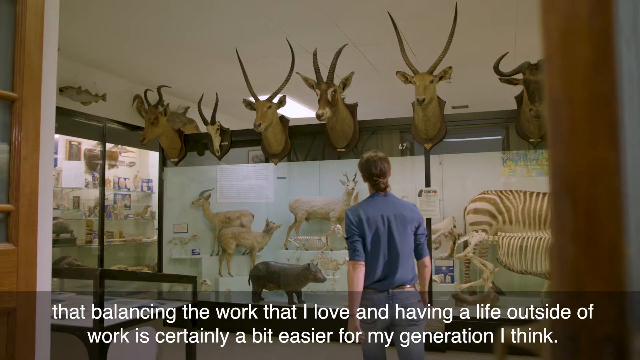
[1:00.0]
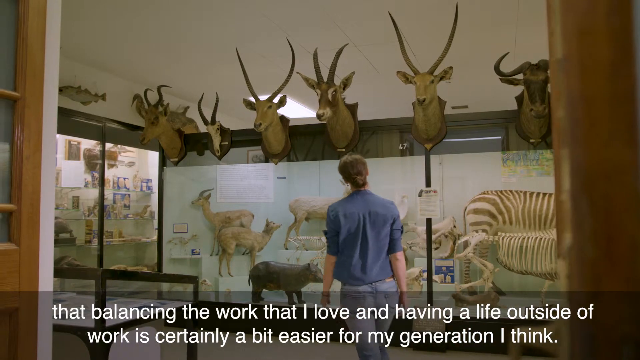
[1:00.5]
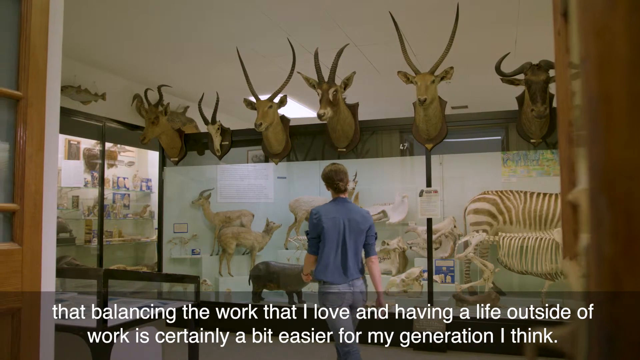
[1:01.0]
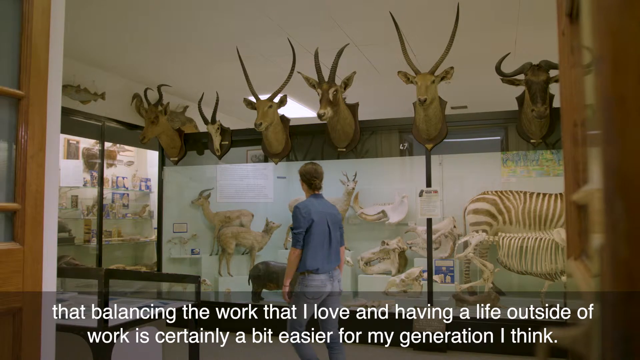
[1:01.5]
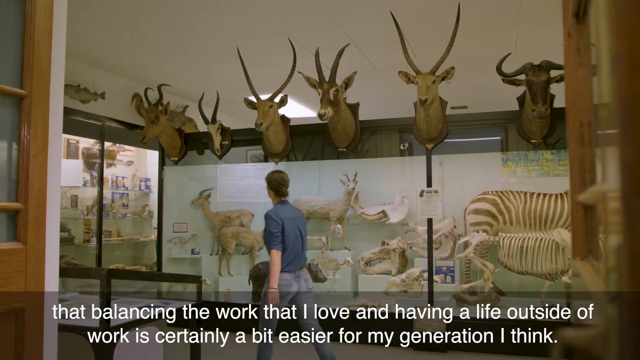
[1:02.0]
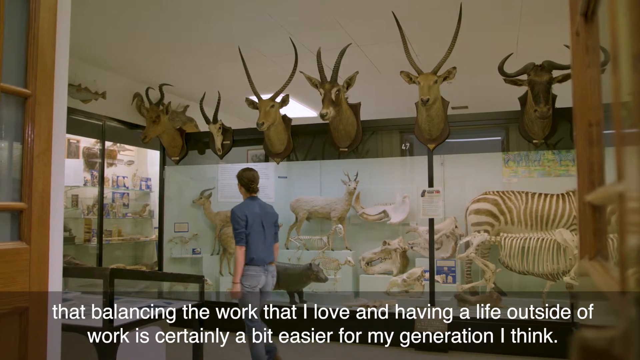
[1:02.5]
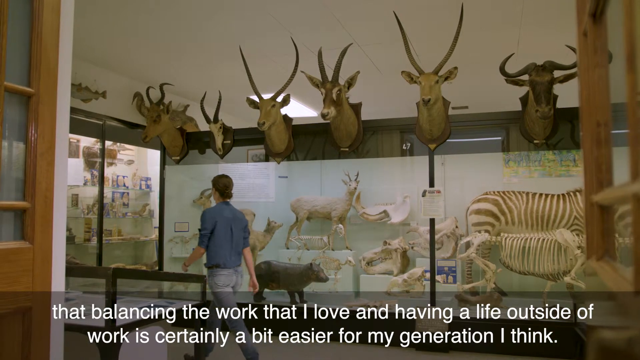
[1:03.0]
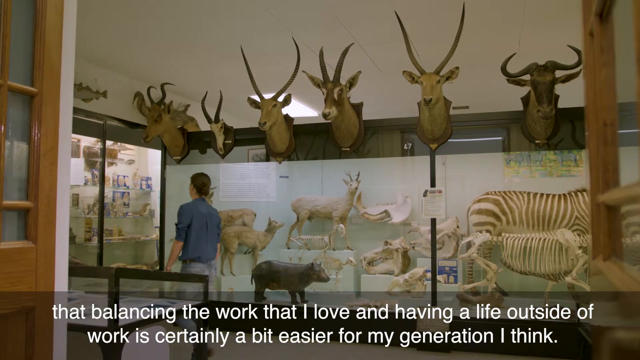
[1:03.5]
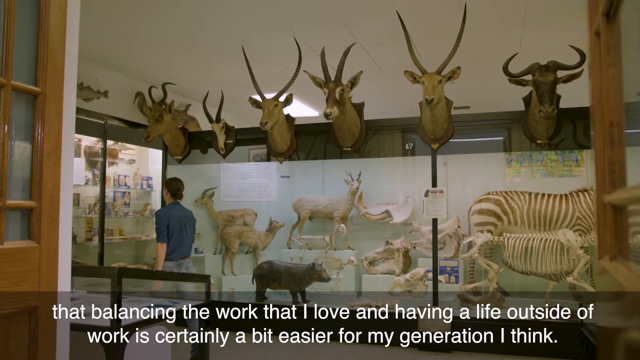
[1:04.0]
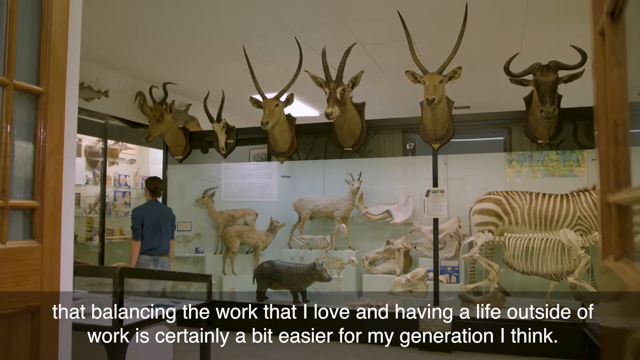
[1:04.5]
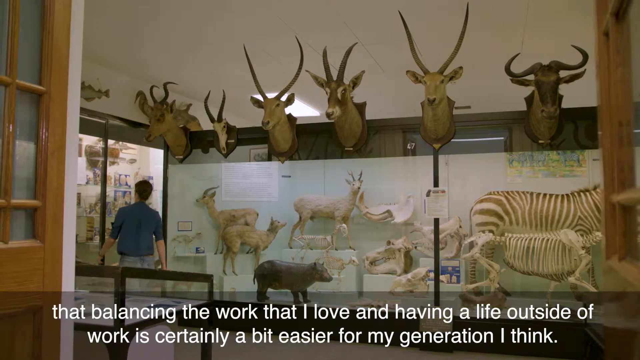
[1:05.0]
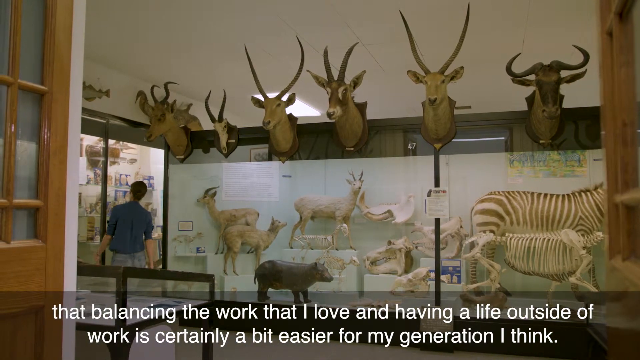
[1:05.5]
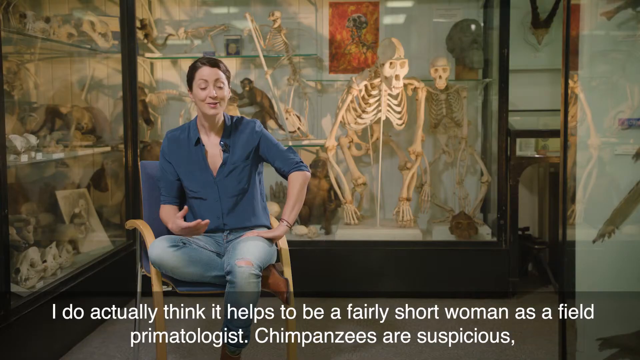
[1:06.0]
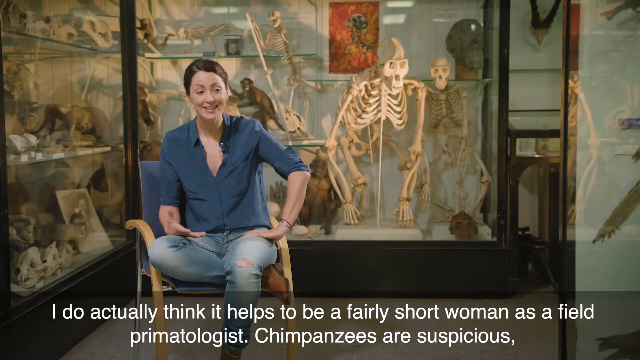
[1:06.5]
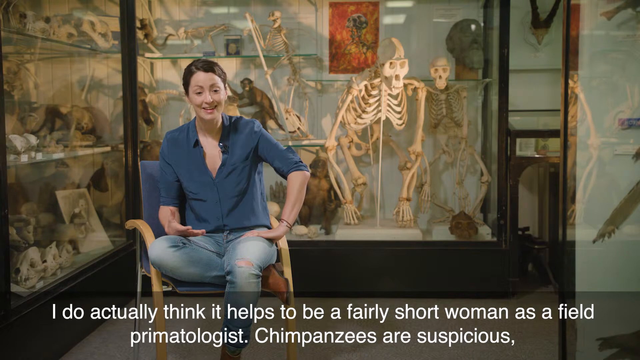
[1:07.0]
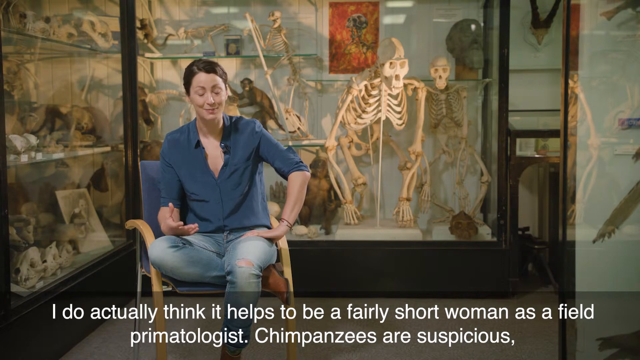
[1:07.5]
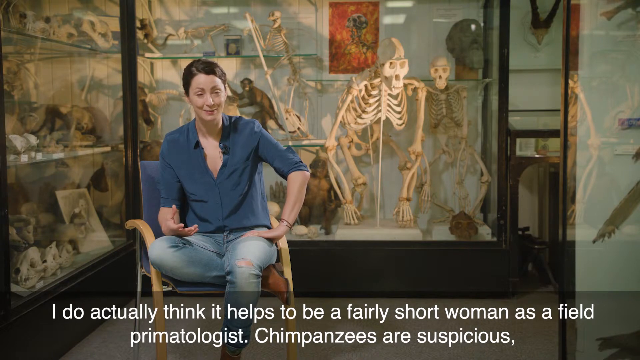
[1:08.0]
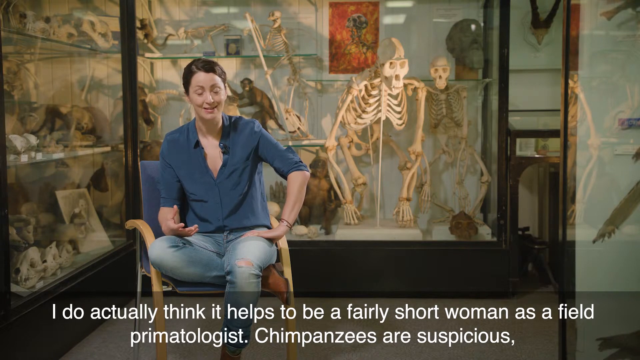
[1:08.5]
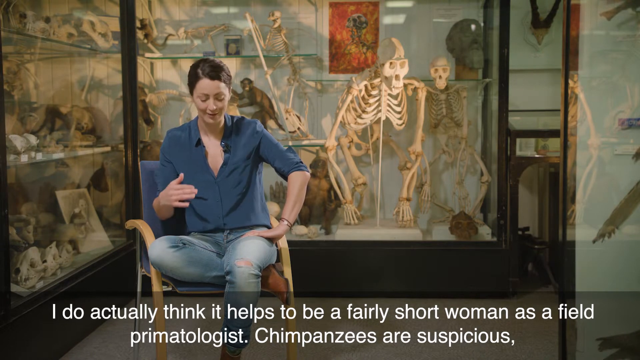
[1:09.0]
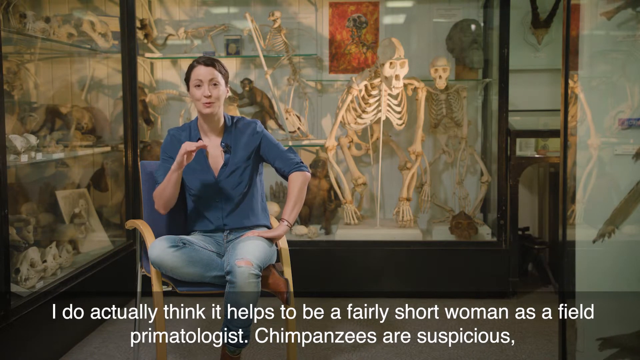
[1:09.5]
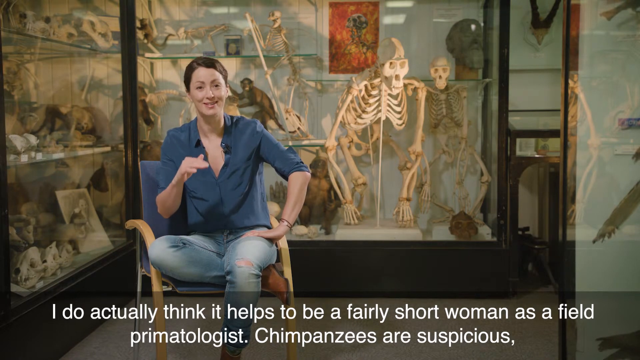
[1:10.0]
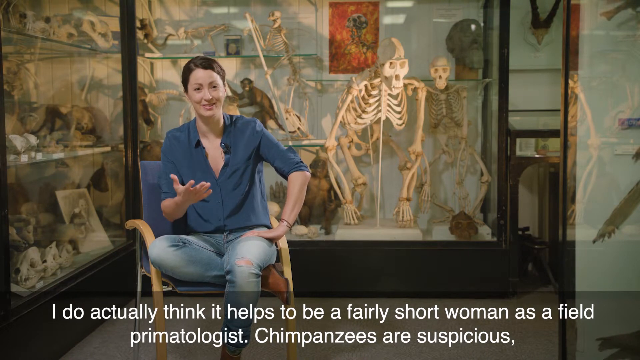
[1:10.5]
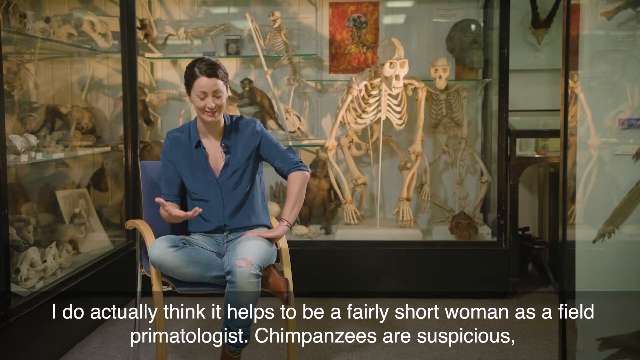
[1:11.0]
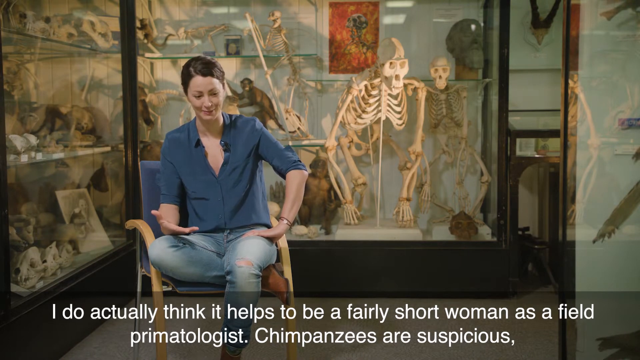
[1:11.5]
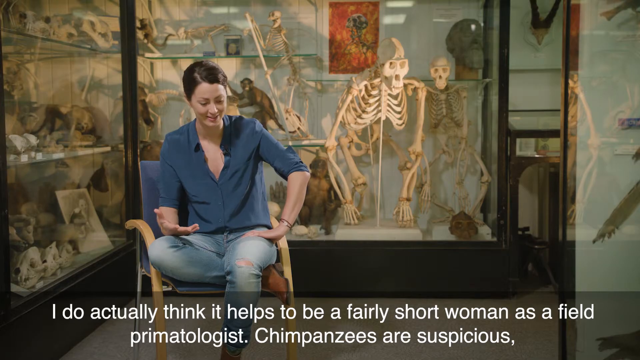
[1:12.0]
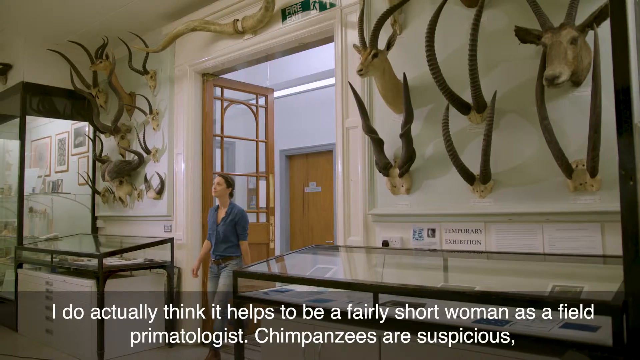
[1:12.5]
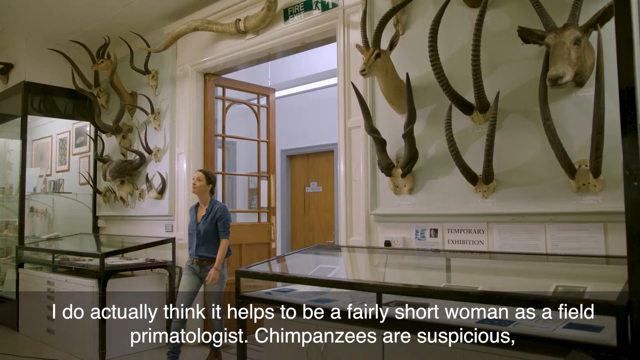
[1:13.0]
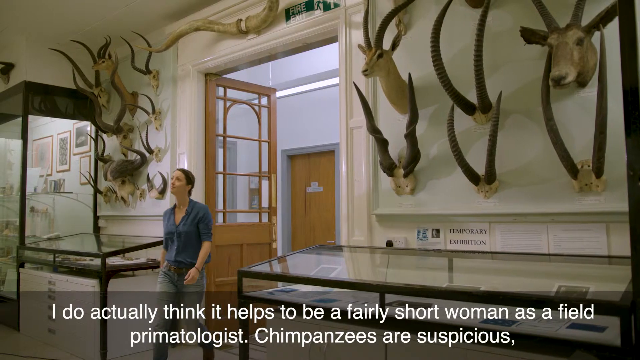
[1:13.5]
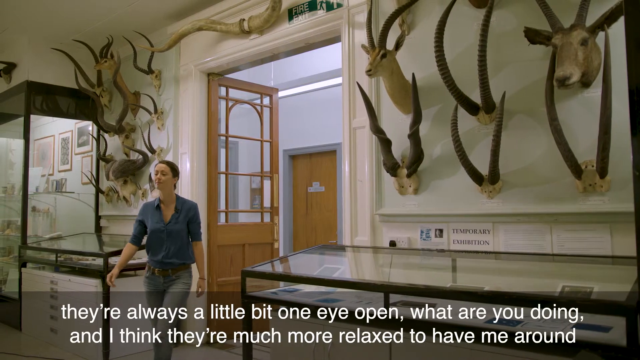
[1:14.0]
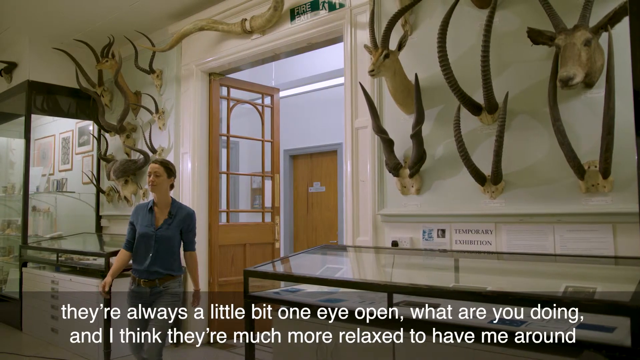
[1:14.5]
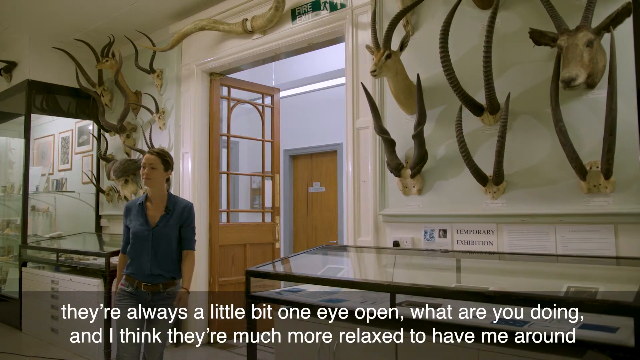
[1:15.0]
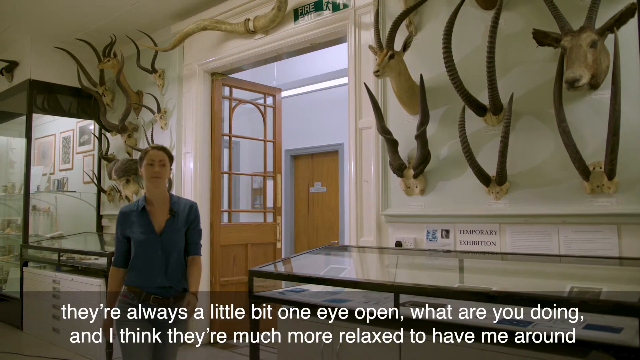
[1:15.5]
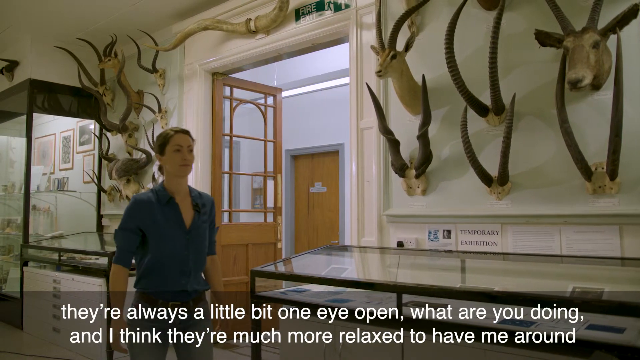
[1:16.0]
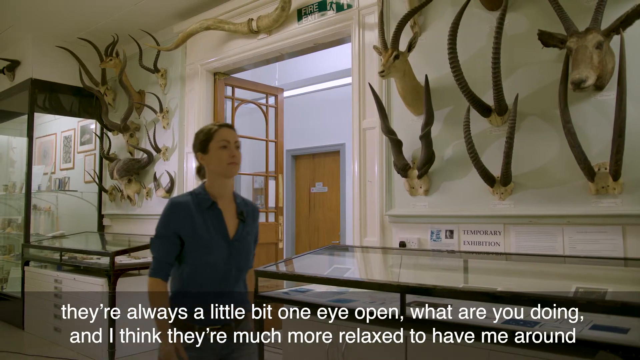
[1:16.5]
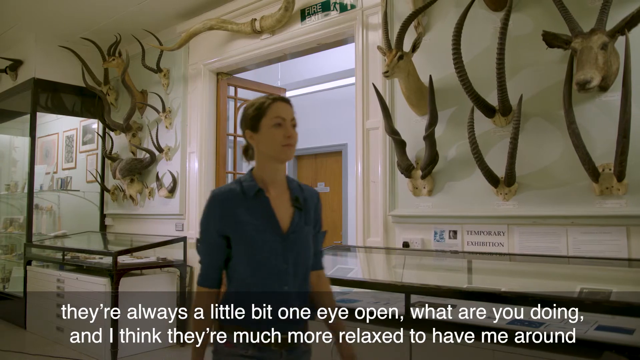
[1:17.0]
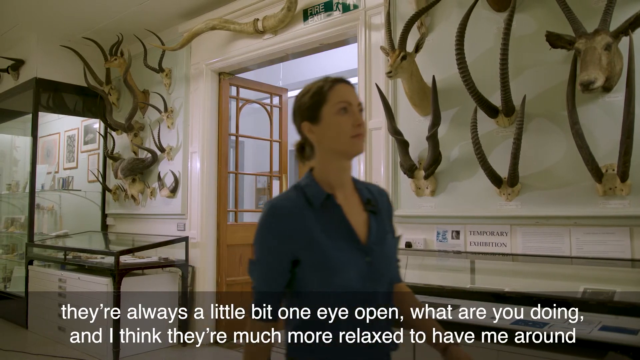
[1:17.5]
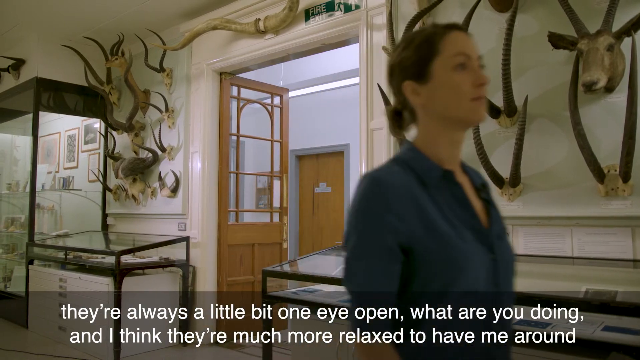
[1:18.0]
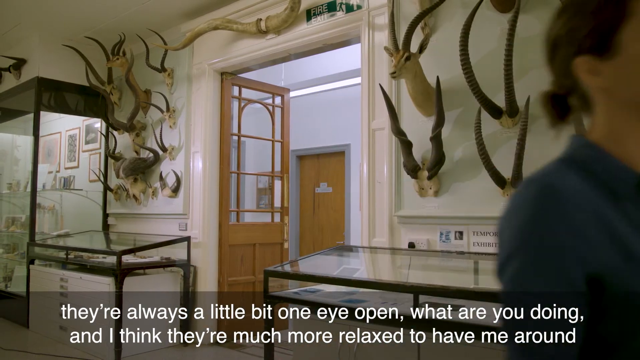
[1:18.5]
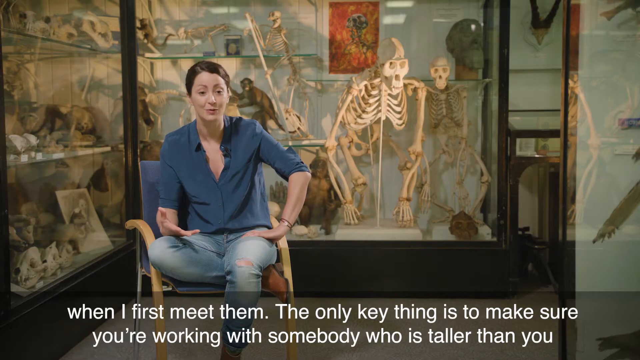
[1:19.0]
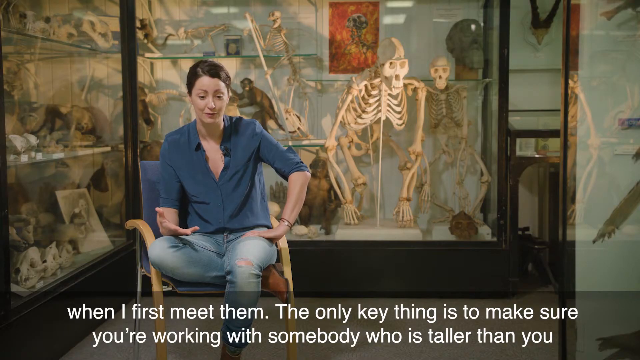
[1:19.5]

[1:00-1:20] A woman with brown hair tied in a bun, wearing a blue shirt with the sleeves rolled up to her elbows and blue jeans, faces away from the viewer and walks to the left side of a room filled with displays of antelope, deer and other horned stag-type animals. In a partially transparent dark gray text box at the bottom, white text reads "that balancing the work that I love and having a life outside of work is certainly a bit easier for my generation, I think." She walks left with her gaze on the display in front of her, then walks around a corner. The video shifts back to the woman sitting in a blue chair, with the bones and stuffed bodies of monkeys and apes in a display case behind her. The white text reads "I do actually think it helps to be a fairly short woman as a field primatologist. Chimpanzees are suspicious,". She smiles as she speaks, her left hand pressed down on her left thigh and her right hand resting on her right thigh. She leans forward a bit, raises her right hand for a second with fingers outstretched but a little curled, then brings it back down. Her eyes flutter as she speaks and her head raises. She brings up her right arm with her fingers flat and thumb pointed up and, as she begins speaking in a more excited manner, twists her hand so her palm faces upward with fingers outstretched in front of her. She looks down, then her eyes widen and her head tilts back as she continues. The video shifts to the woman walking to the left in a new room; she walks left, then toward the viewer, looking to the left. The text changes to "they are always a little bit one eye open, what are you doing, and I think they are much more relaxed to have me around." She then begins walking to the right, her gaze turning right. The video returns to the woman sitting in the blue chair, and the text in the gray box reads "when I first meet them. The only key thing is to make sure you're working with somebody who is taller than you." She looks down as she continues to speak.